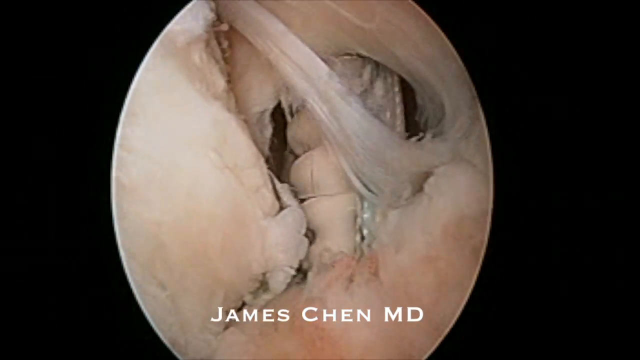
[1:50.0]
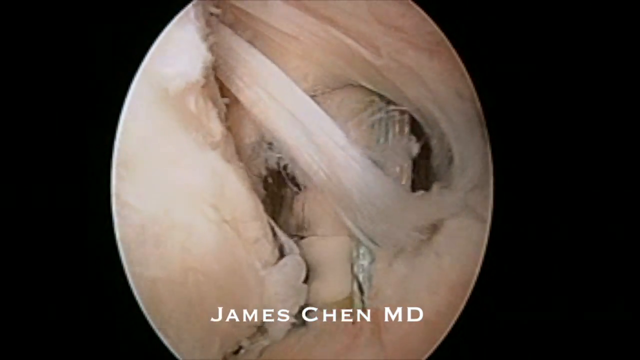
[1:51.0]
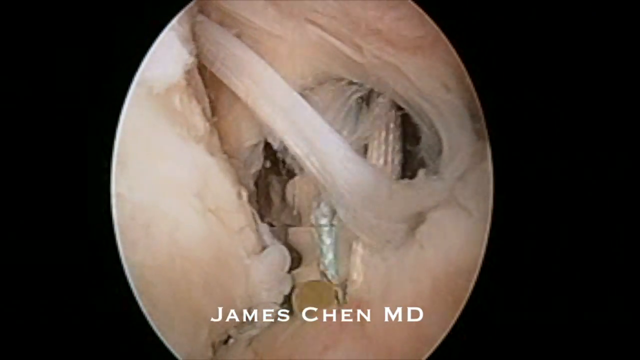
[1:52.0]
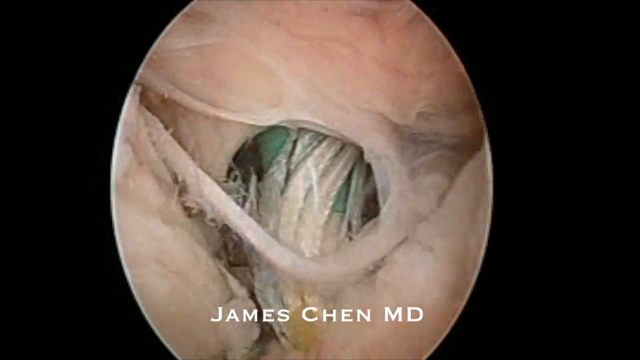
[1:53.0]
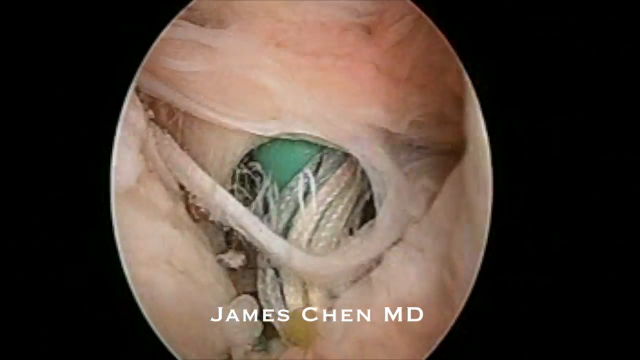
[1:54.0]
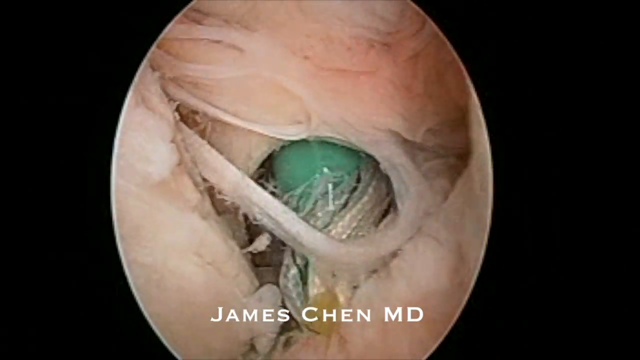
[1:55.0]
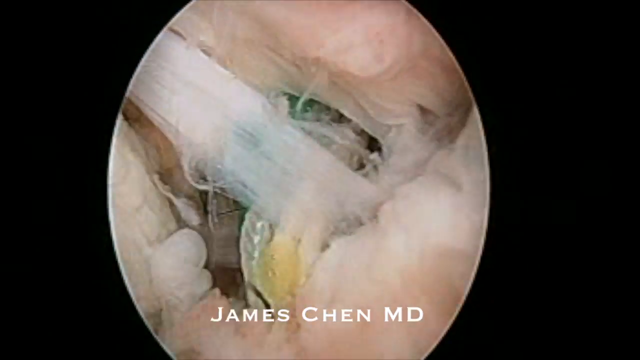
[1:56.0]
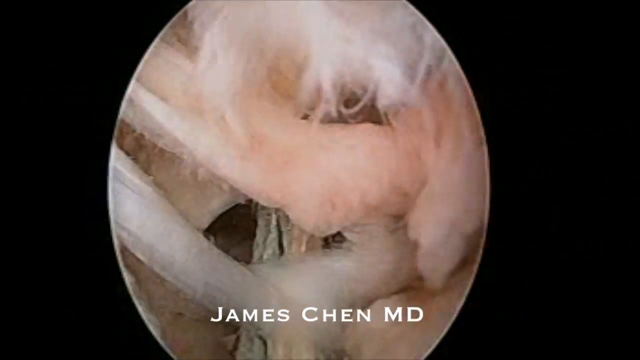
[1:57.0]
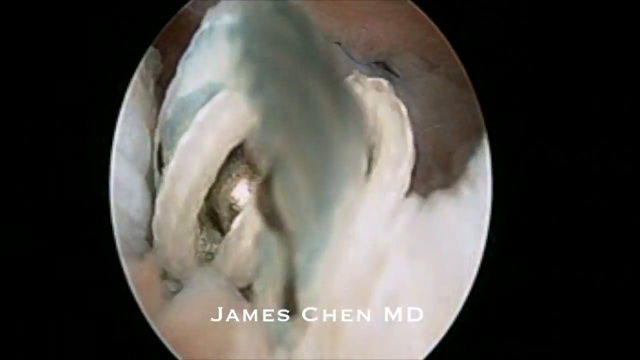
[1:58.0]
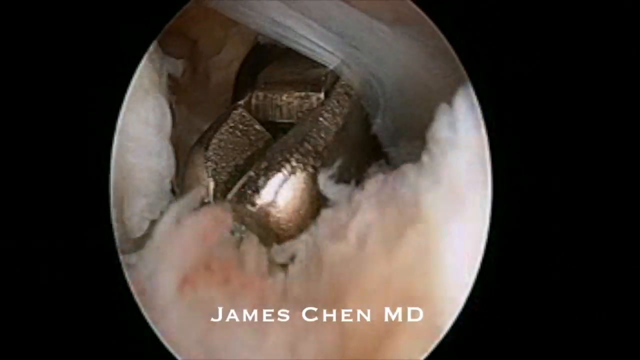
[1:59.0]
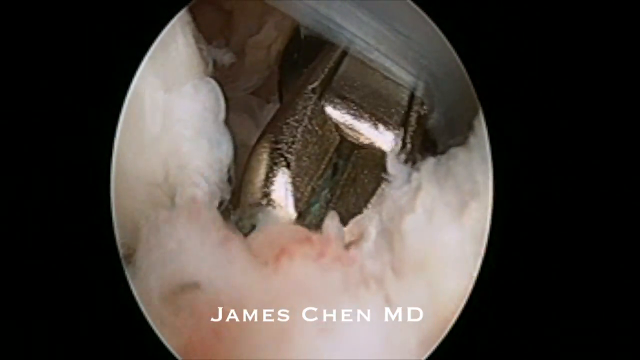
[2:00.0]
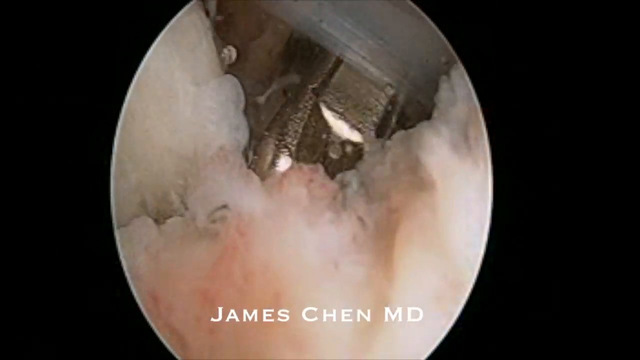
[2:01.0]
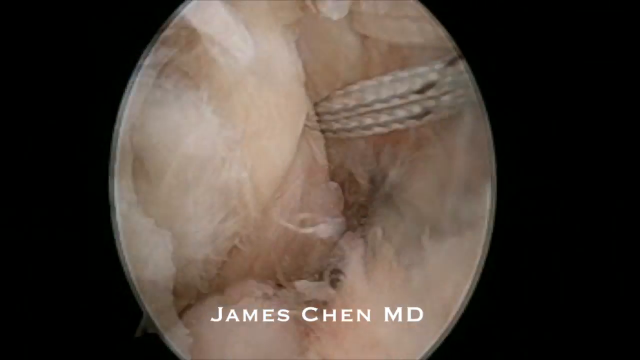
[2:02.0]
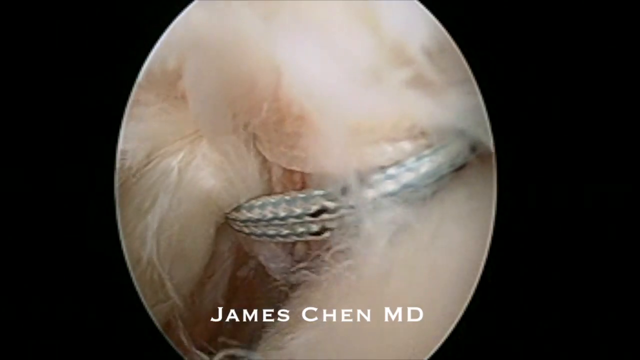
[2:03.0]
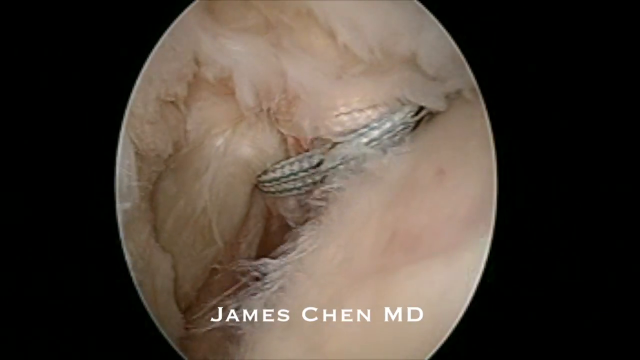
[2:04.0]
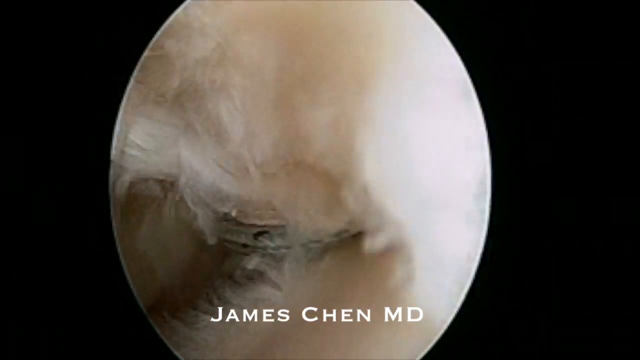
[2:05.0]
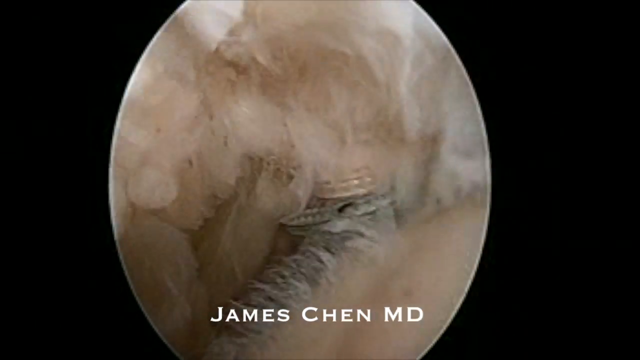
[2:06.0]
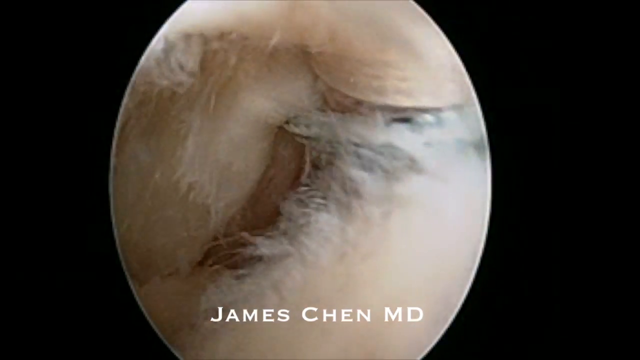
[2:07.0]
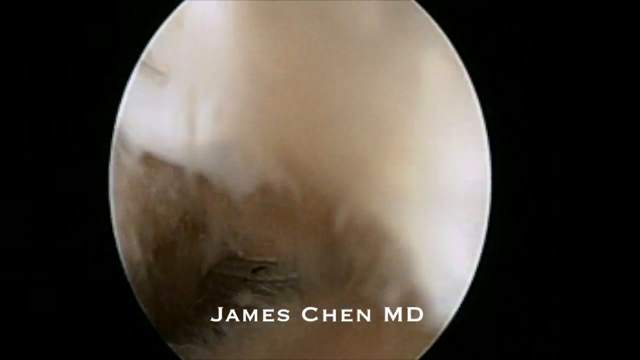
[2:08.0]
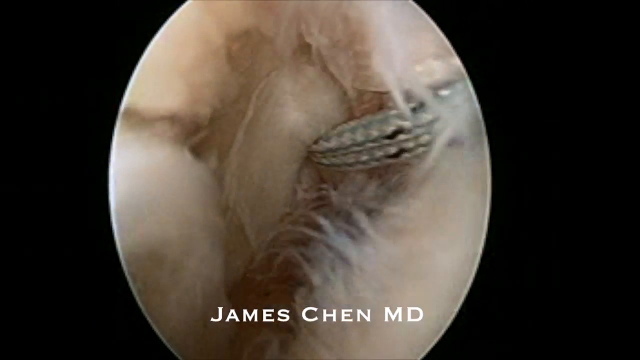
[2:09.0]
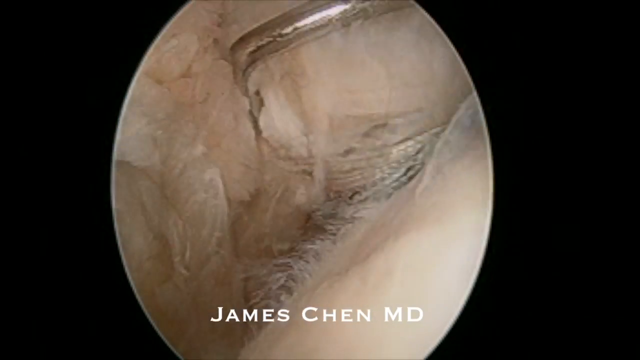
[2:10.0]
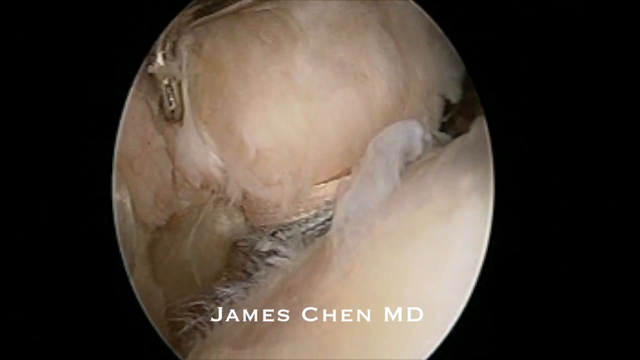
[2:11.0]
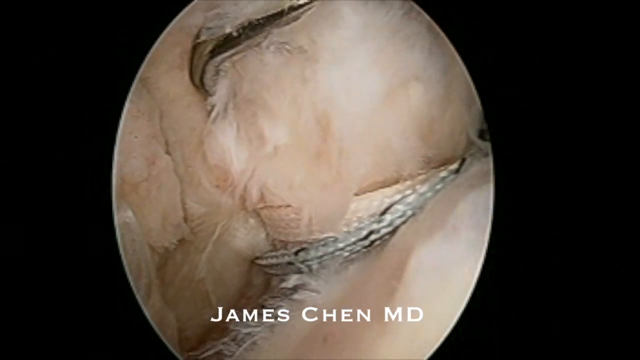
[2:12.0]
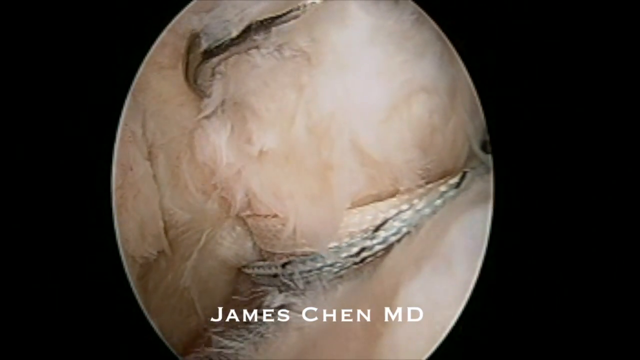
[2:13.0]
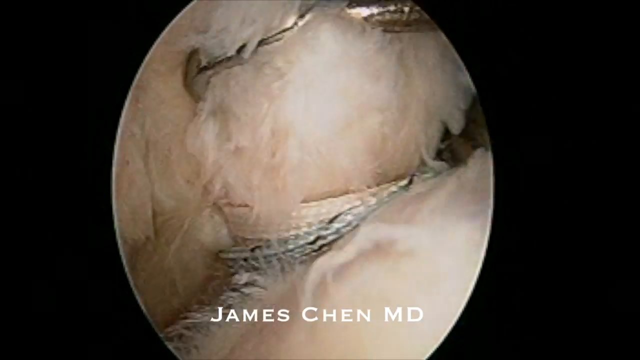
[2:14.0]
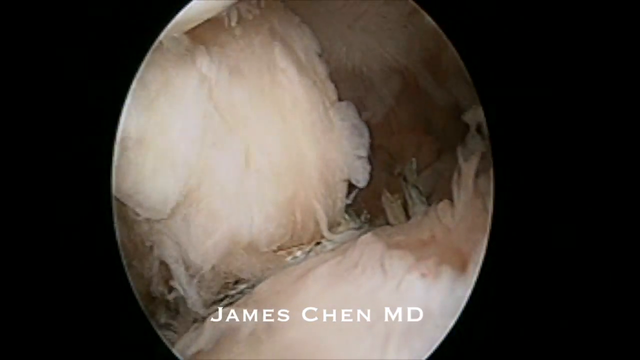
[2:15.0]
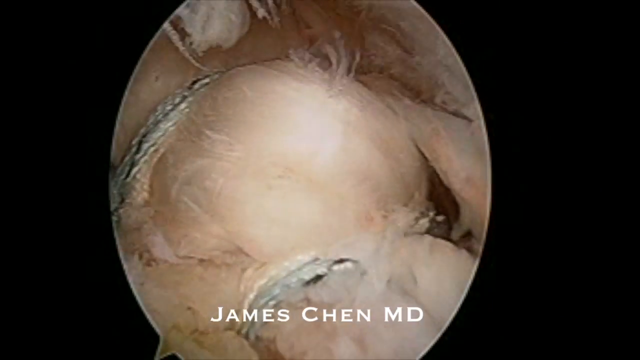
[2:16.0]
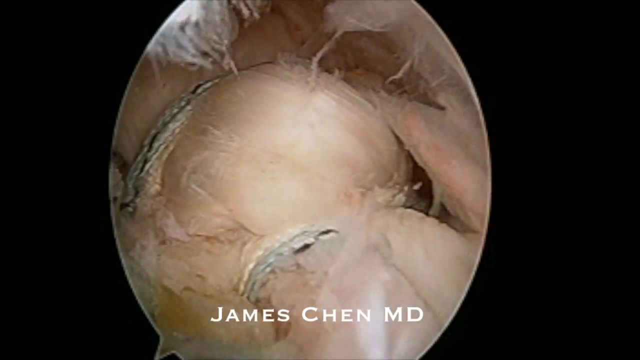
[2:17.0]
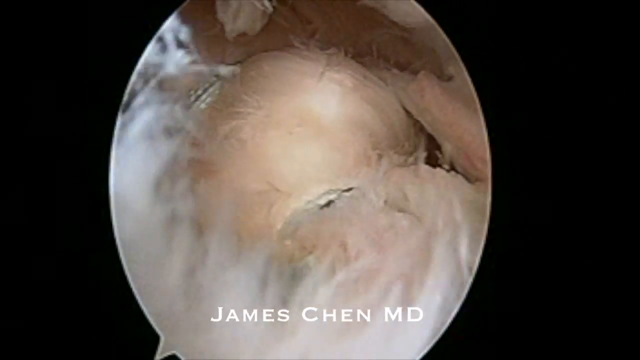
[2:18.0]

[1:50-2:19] The drilling or borehole tool is being used, shaking the camera up and down. A flap of string is in front of the camera, and behind it the white borehole tool is kind of digging, with a lot of camera shake. Then there is a very close-up view of a silver cutting tool, almost like pliers or a mini bolt cutter, used to cut parts of the inside of the body or the rope, and the rope appears to continue being tied around different parts within the body. As the boring continues, a green part is visible at the tip of the white boring tool, which shakes the image up and down. The plier-type tool appears to snip part of the rope off.